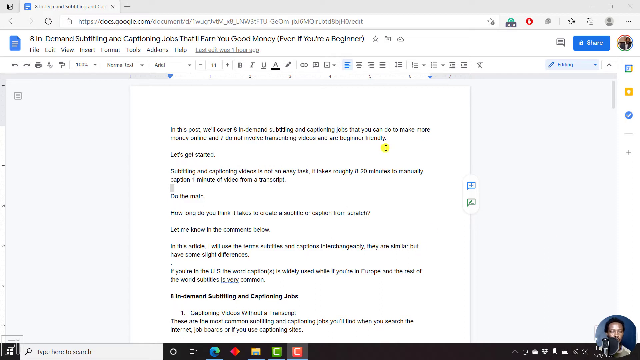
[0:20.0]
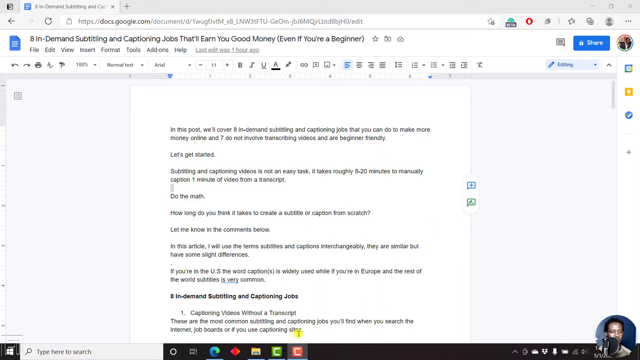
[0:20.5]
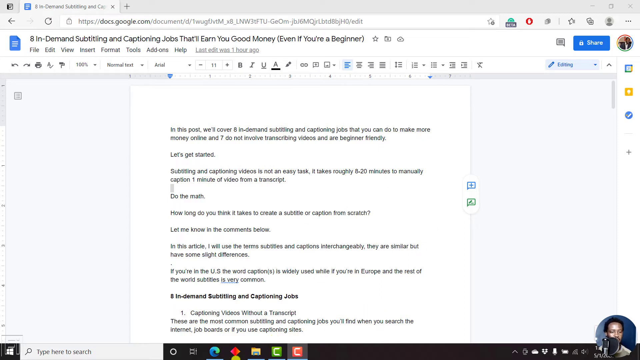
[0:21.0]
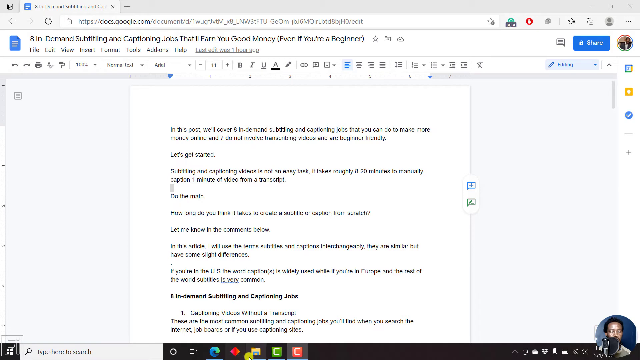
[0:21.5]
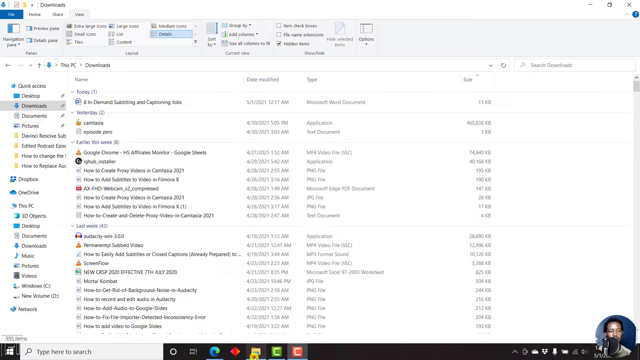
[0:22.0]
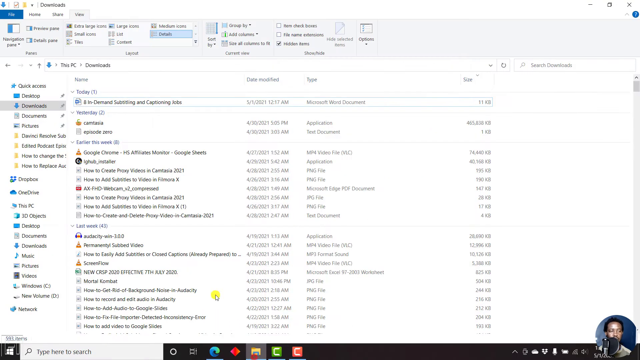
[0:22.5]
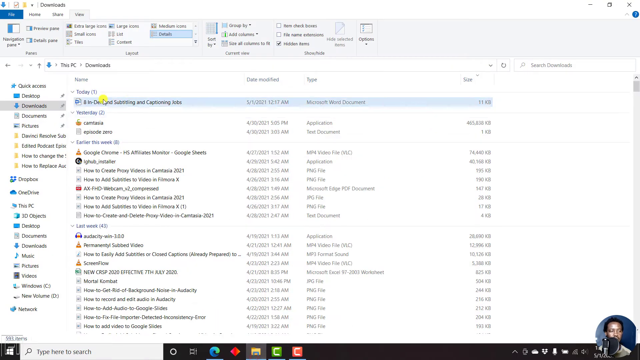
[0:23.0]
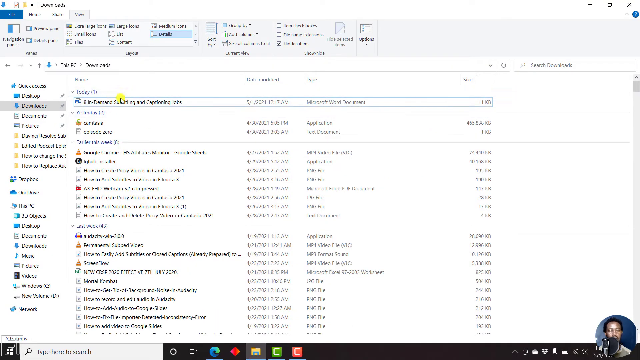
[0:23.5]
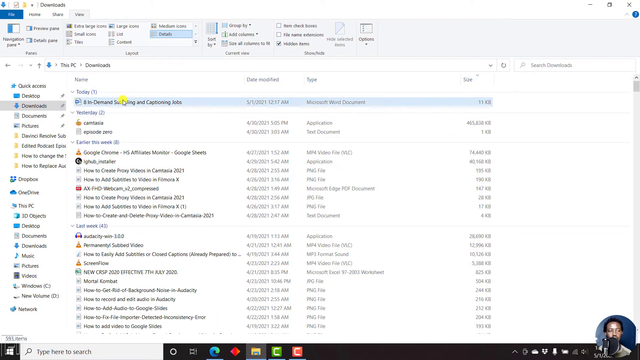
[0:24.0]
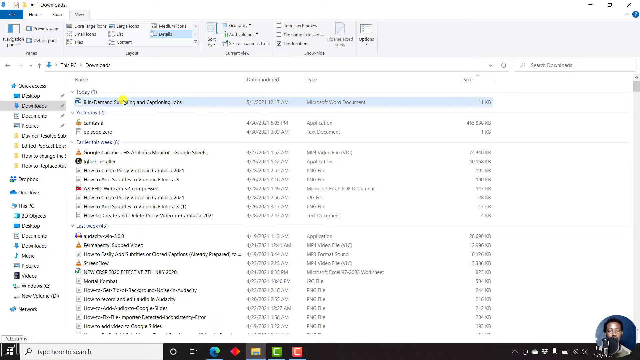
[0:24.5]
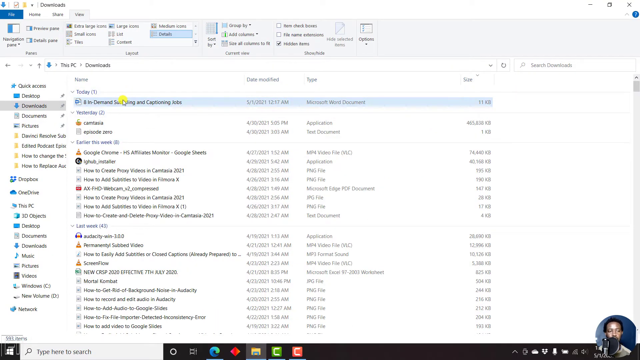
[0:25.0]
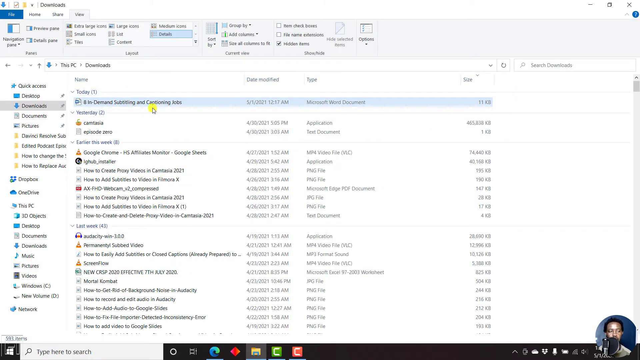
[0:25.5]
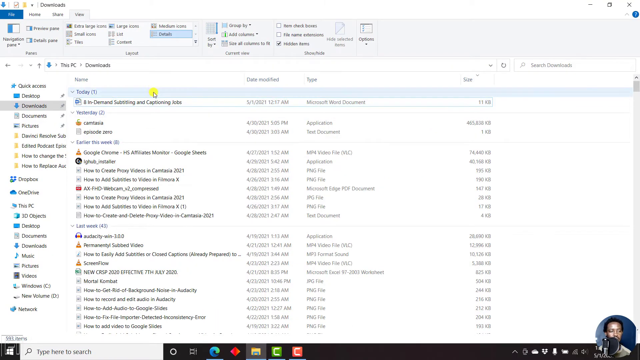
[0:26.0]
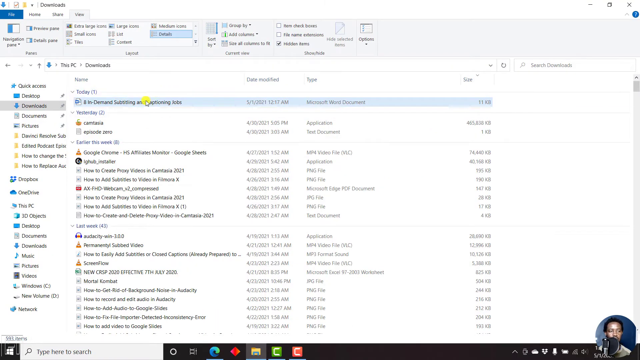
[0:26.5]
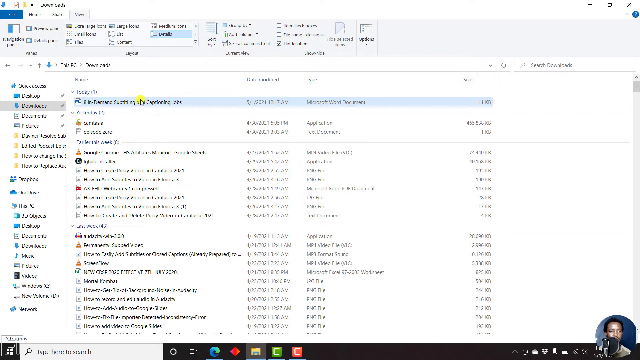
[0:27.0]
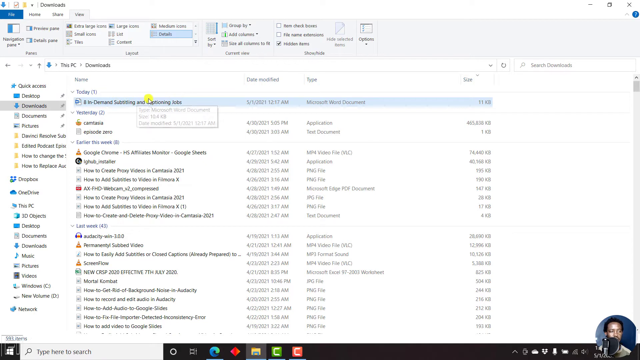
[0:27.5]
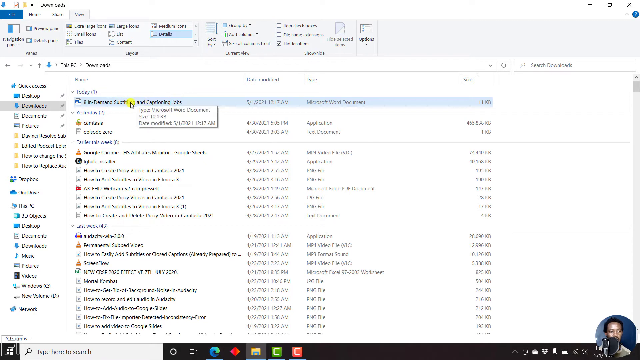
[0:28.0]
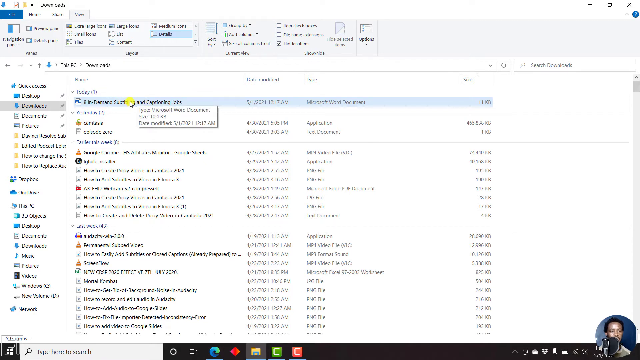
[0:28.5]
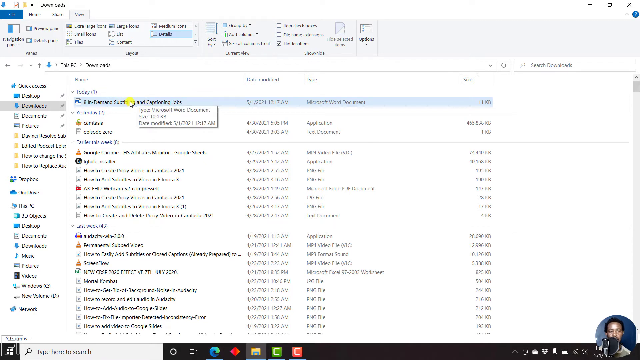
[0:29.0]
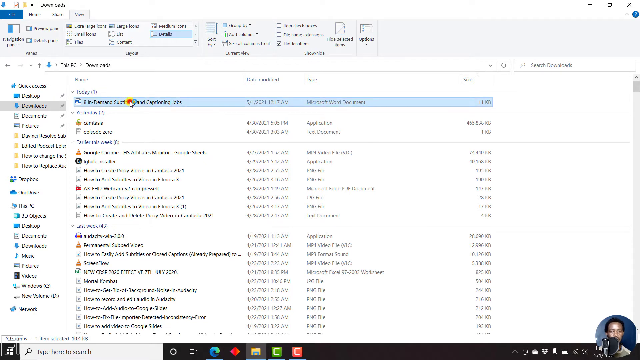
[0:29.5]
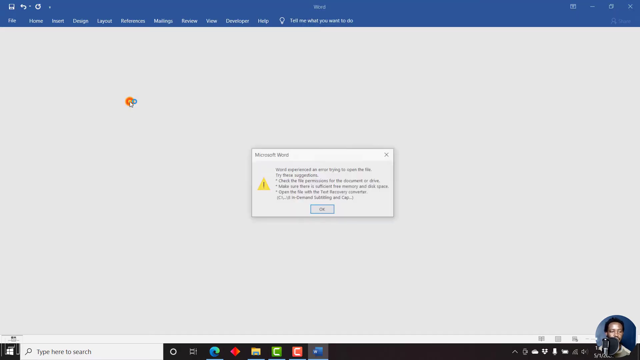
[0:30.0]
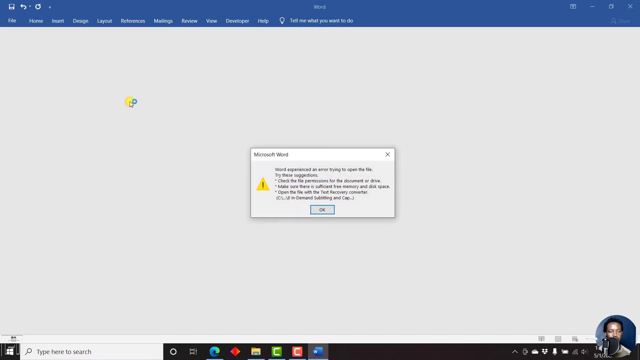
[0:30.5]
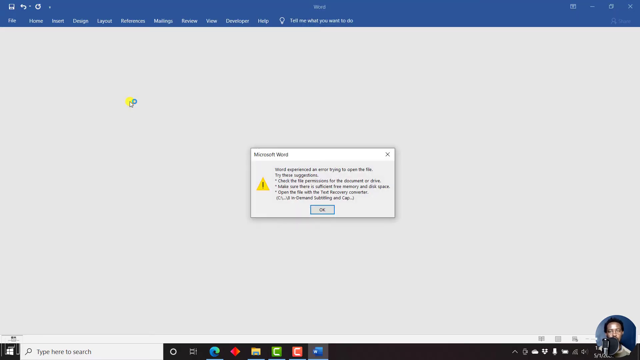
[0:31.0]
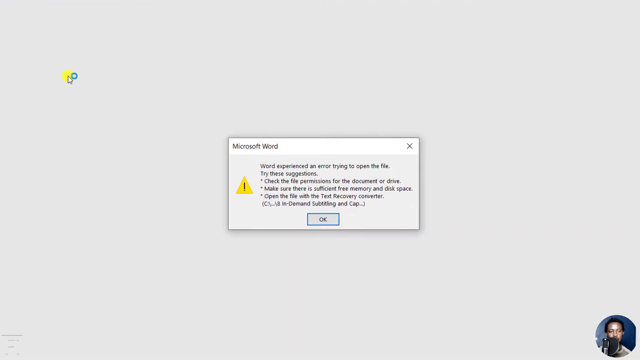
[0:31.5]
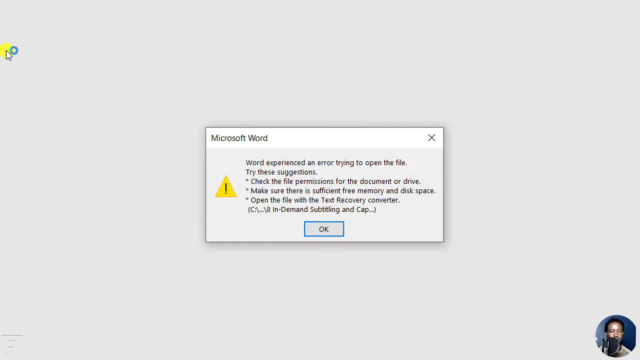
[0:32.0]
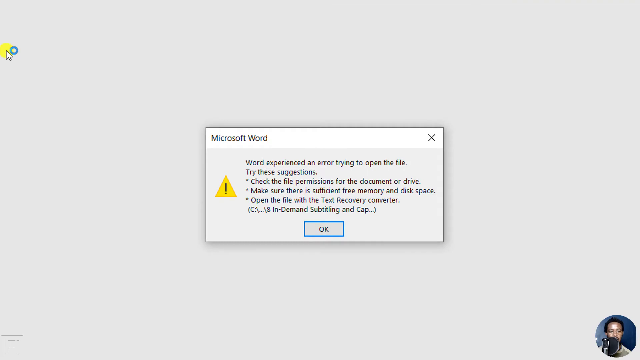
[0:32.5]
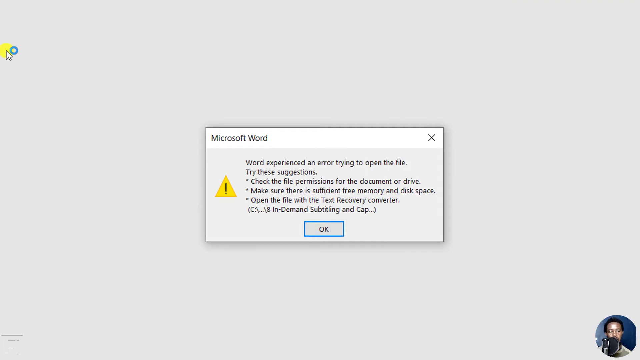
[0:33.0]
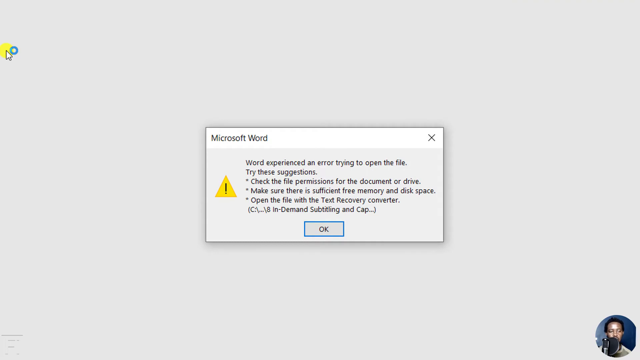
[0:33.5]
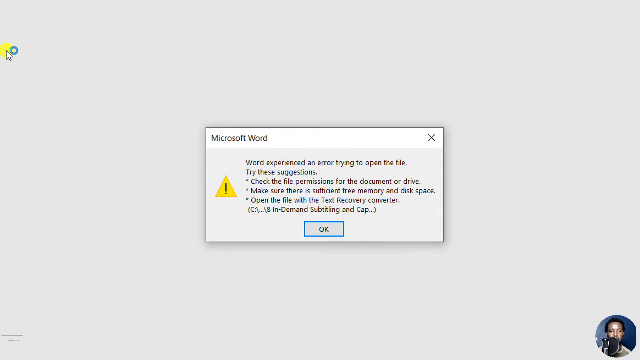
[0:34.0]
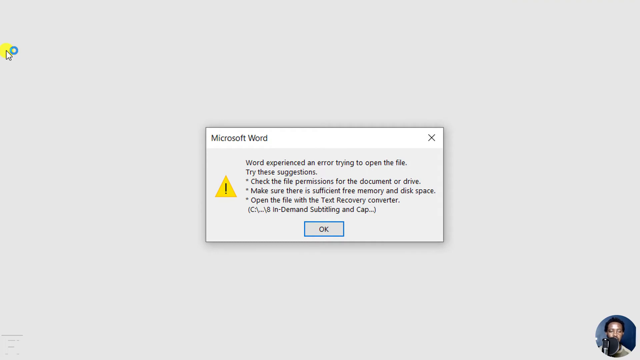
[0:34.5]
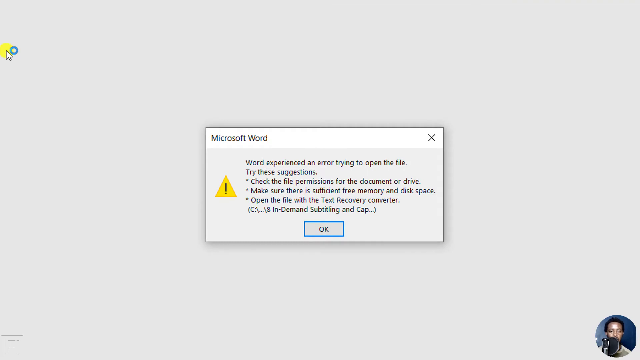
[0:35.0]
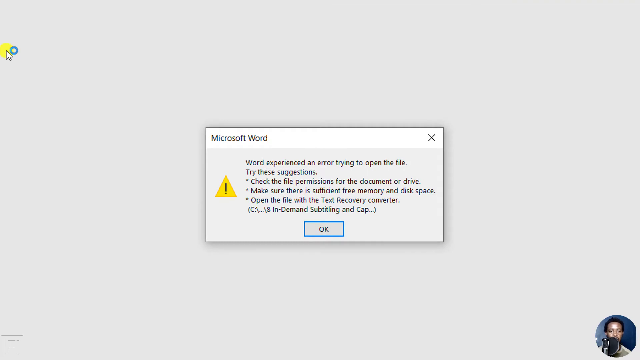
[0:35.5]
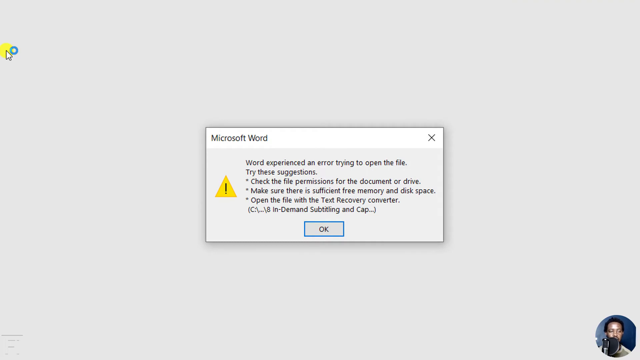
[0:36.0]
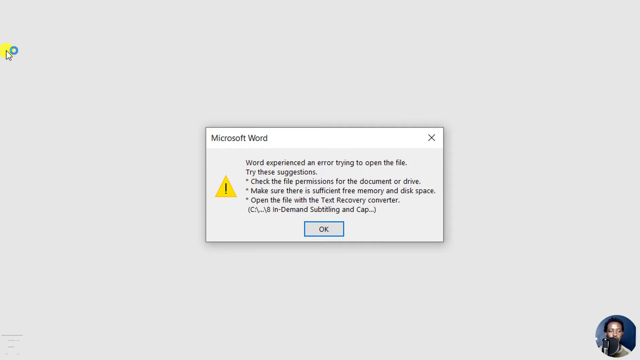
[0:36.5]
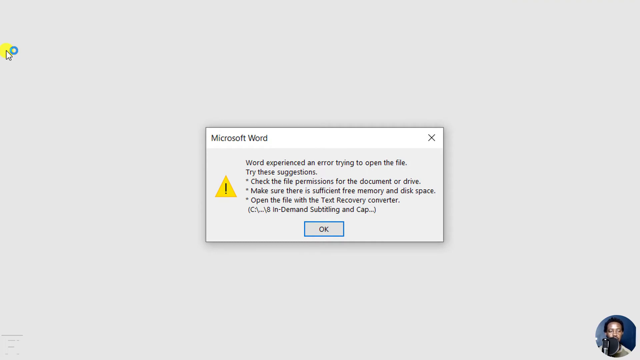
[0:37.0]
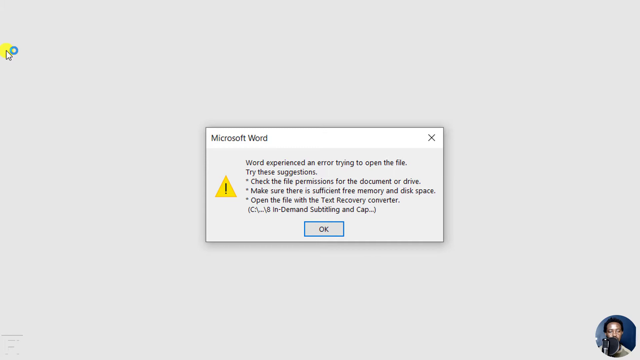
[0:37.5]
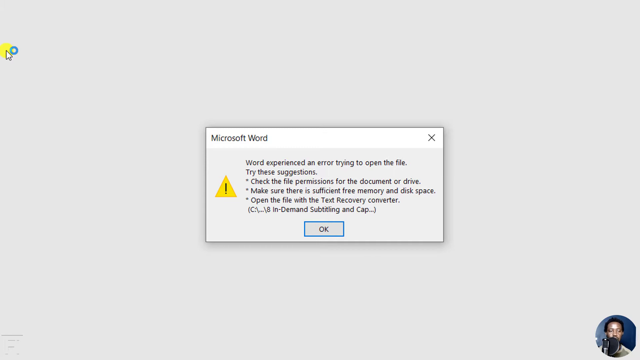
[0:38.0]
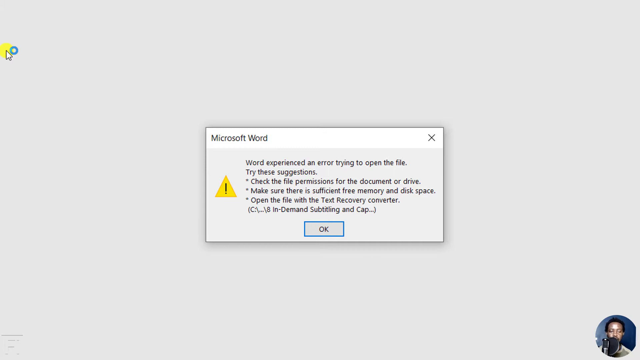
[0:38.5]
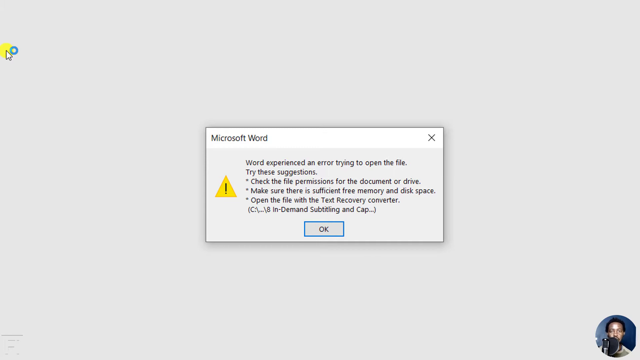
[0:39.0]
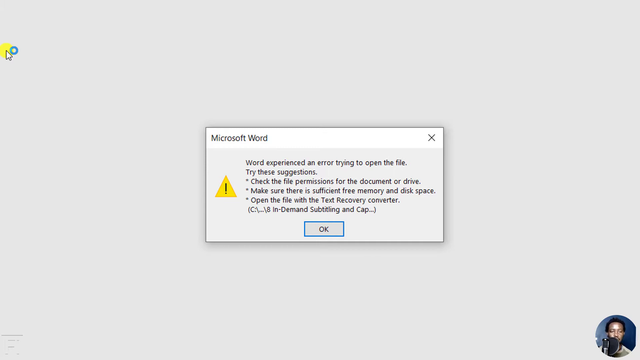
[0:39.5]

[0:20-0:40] The screen recording of the Google document continues. The document reads: "In this post, we'll cover 8 in-demand subtitling and captioning jobs that you can do to make more money online, and 7 do not involve transcribing videos and are beginner-friendly. Let's get started. Subtitling and captioning videos is not an easy task. It takes roughly 8-20 minutes to manually caption 1 minute of video from a transcript. Do the math. How long do you think it takes to create a subtitle or caption from scratch? Let me know in the comments below. In this article, I will use the terms subtitles and captions interchangeably. They are similar, but have some slight differences. If you're in the U.S., the word captions is widely used, while if you're in Europe and the rest of the world, subtitles is very common." The screen then changes to various files on the person's computer. He is in the downloads file, which shows the Word document. He double-clicks the Word document to open it, and a text box appears for the Microsoft Word program that says "Word experienced an error trying to open the file. Try these suggestions."